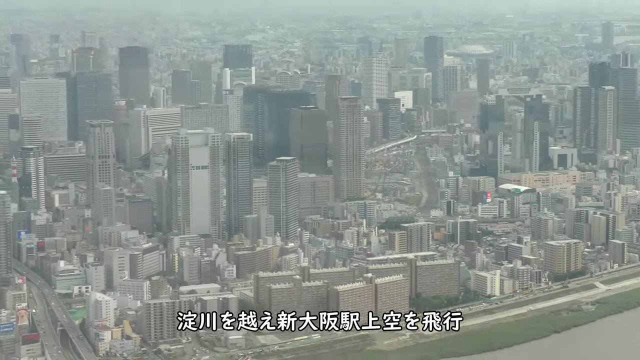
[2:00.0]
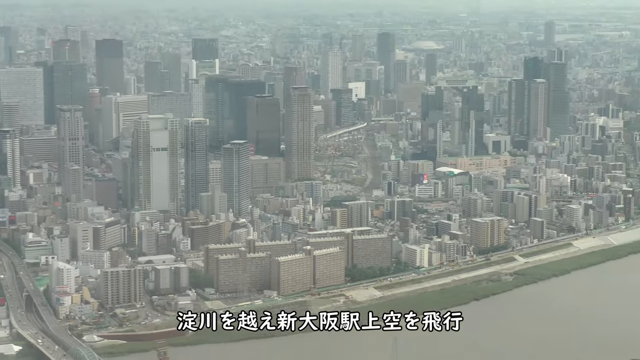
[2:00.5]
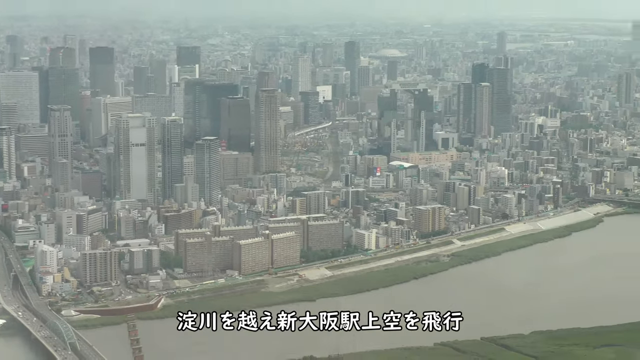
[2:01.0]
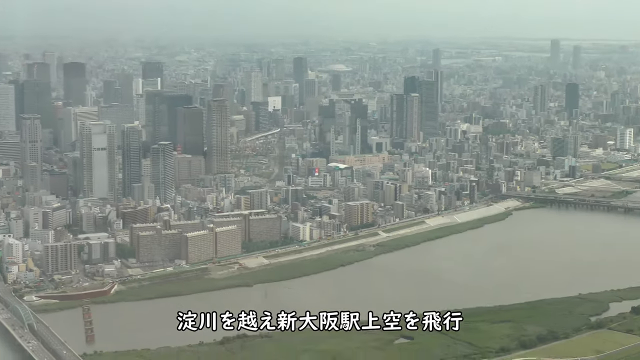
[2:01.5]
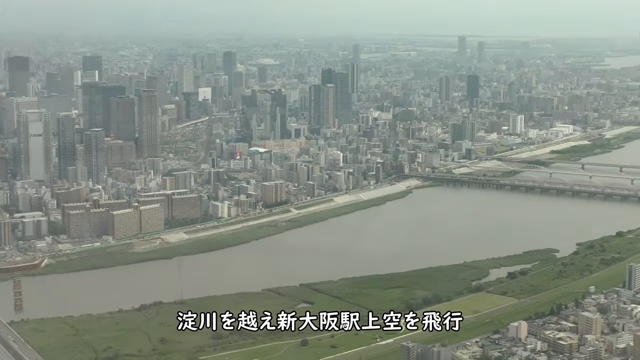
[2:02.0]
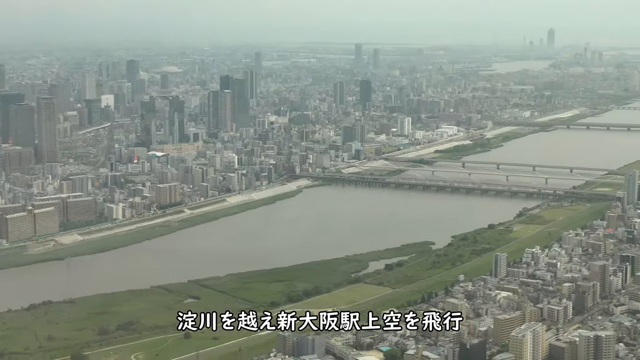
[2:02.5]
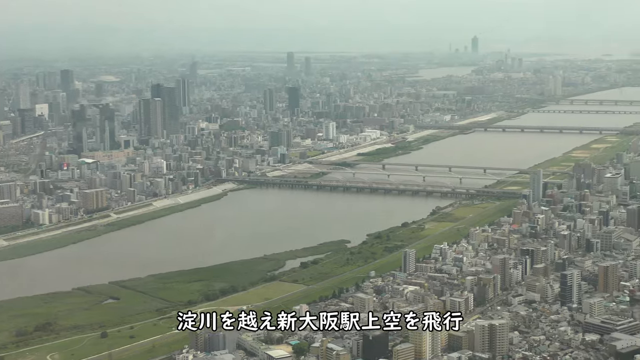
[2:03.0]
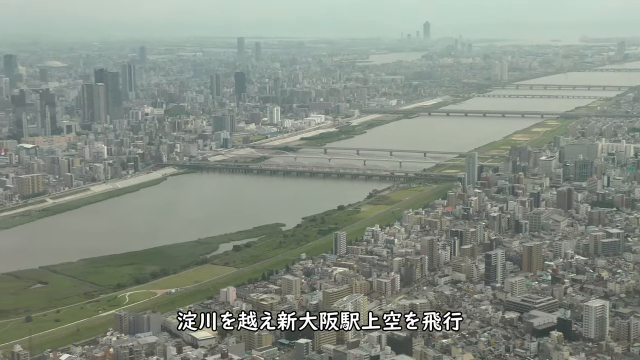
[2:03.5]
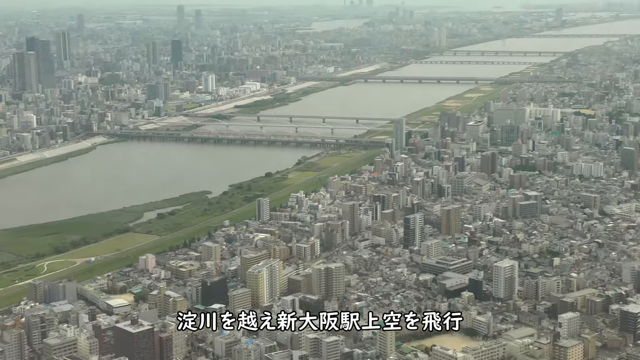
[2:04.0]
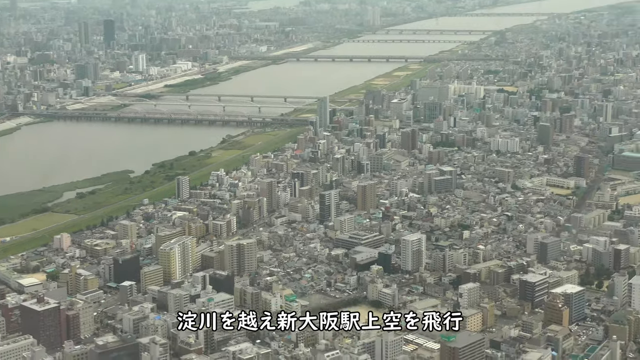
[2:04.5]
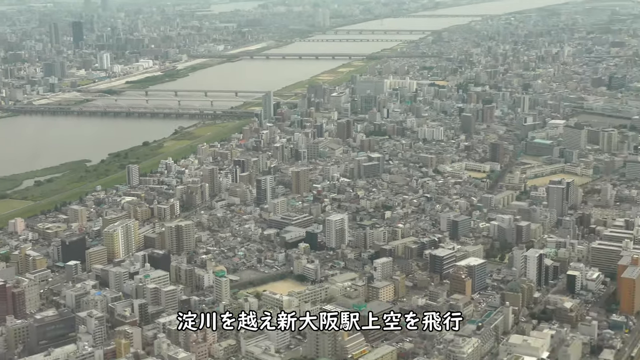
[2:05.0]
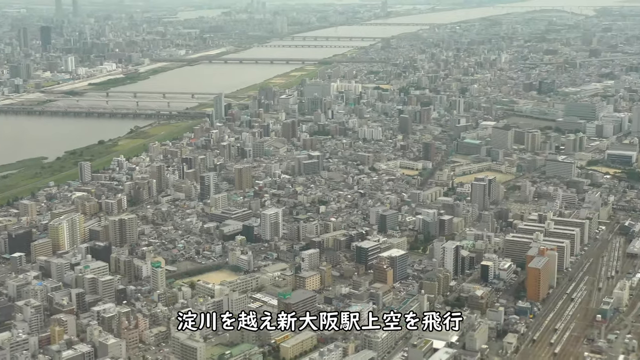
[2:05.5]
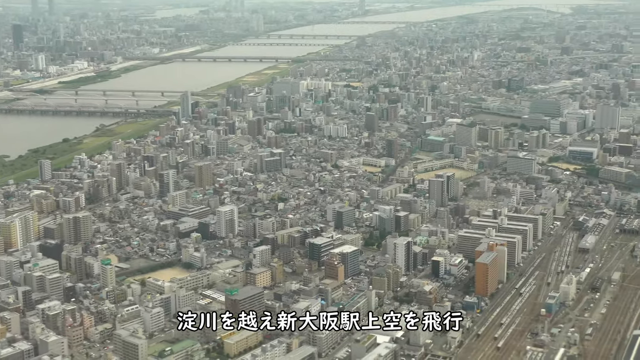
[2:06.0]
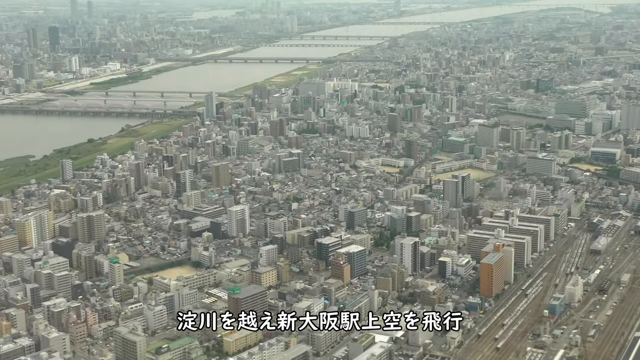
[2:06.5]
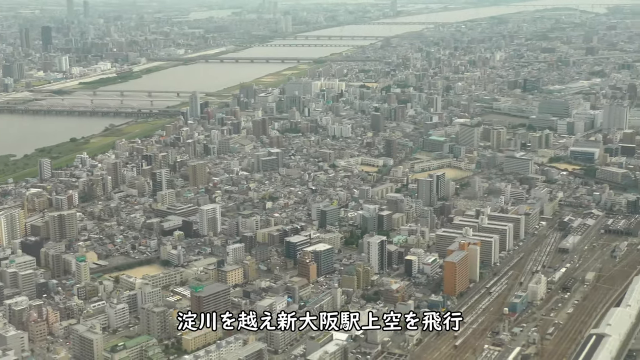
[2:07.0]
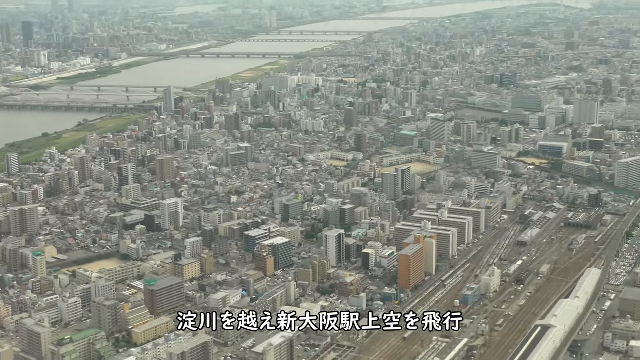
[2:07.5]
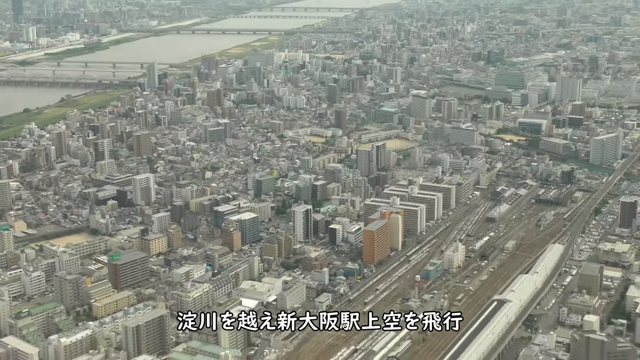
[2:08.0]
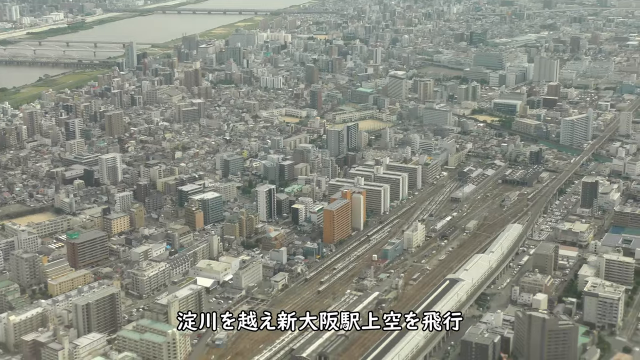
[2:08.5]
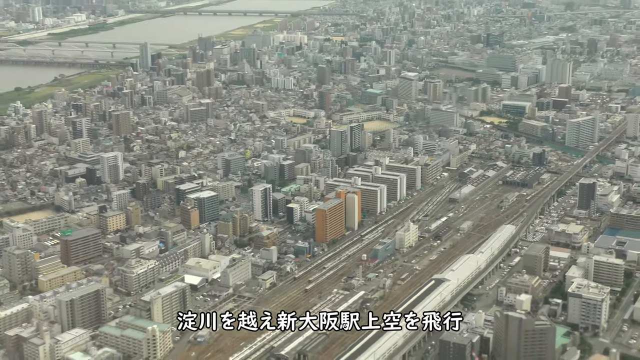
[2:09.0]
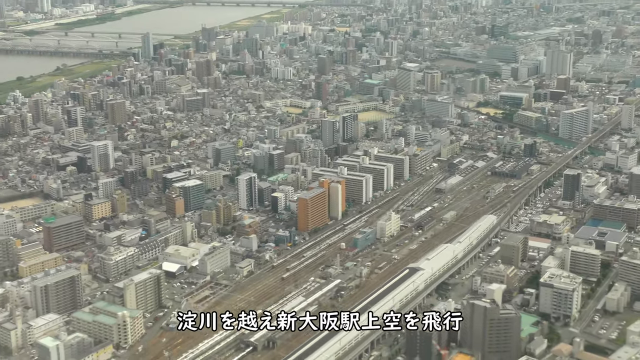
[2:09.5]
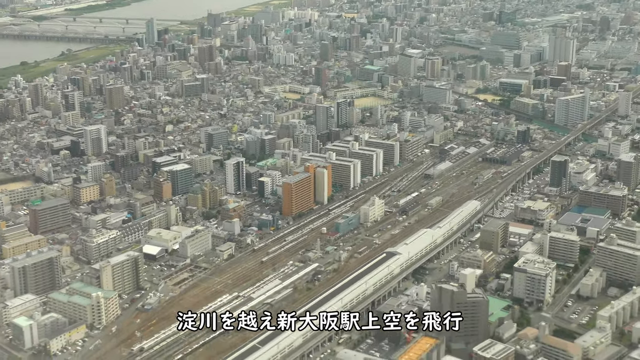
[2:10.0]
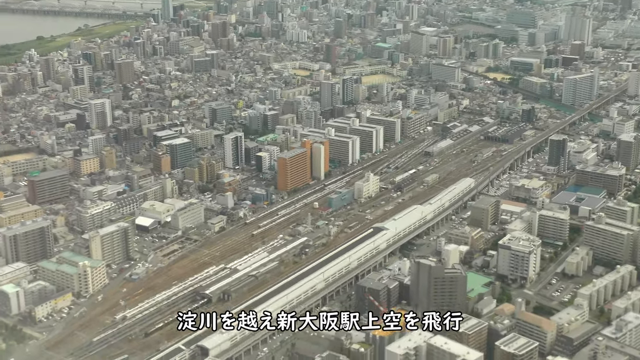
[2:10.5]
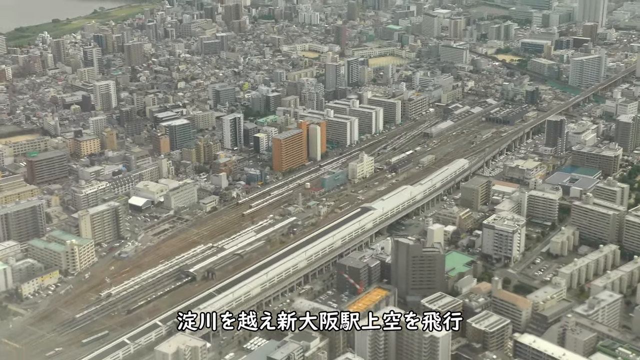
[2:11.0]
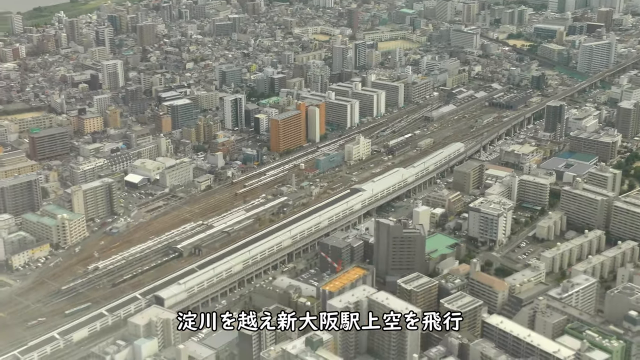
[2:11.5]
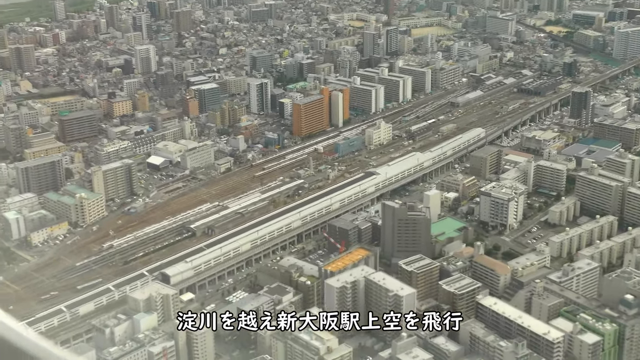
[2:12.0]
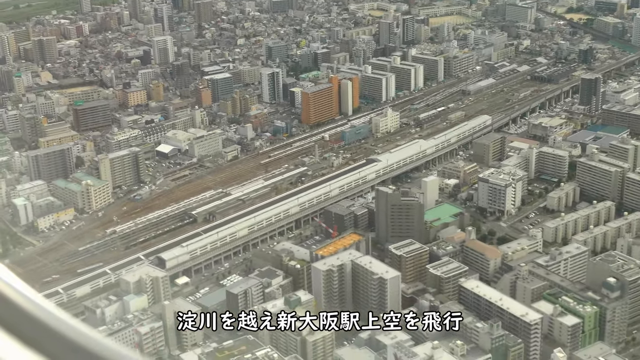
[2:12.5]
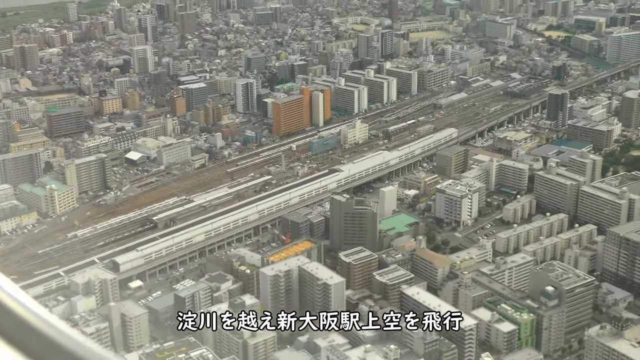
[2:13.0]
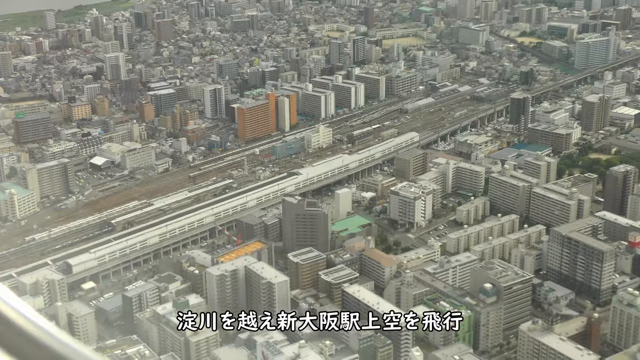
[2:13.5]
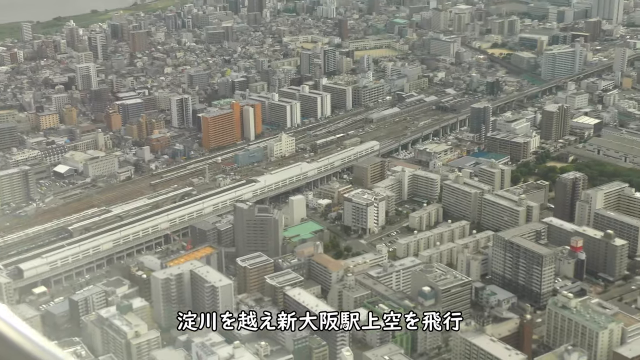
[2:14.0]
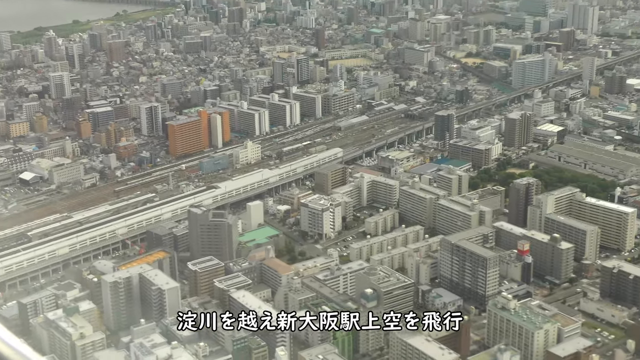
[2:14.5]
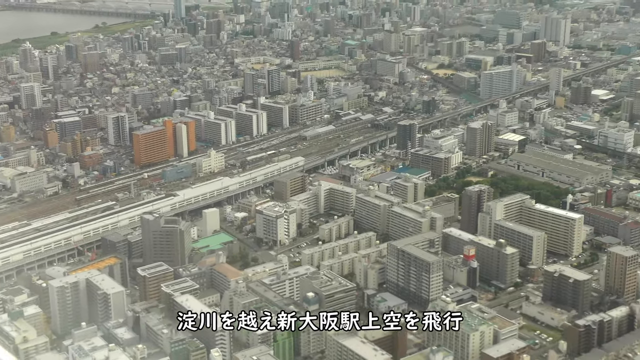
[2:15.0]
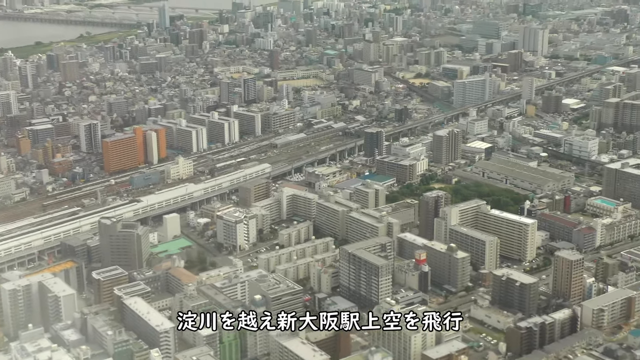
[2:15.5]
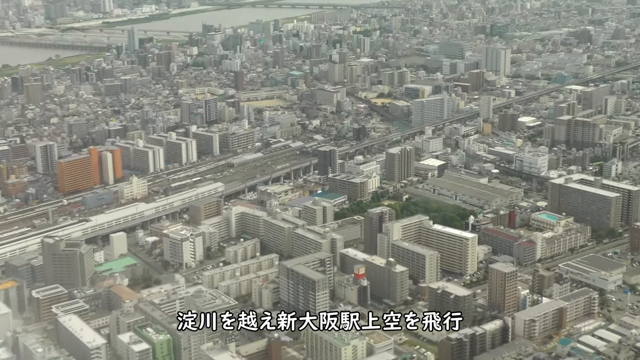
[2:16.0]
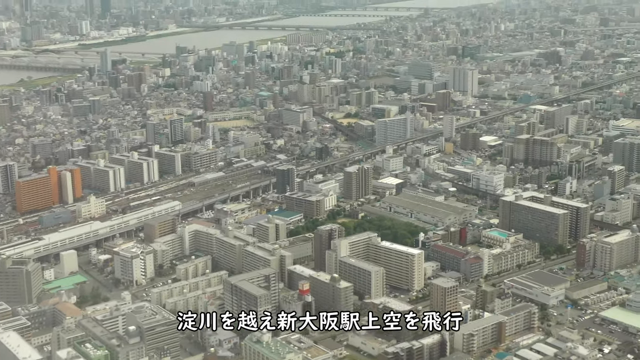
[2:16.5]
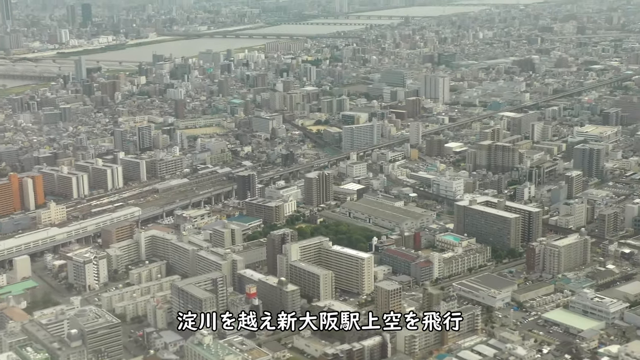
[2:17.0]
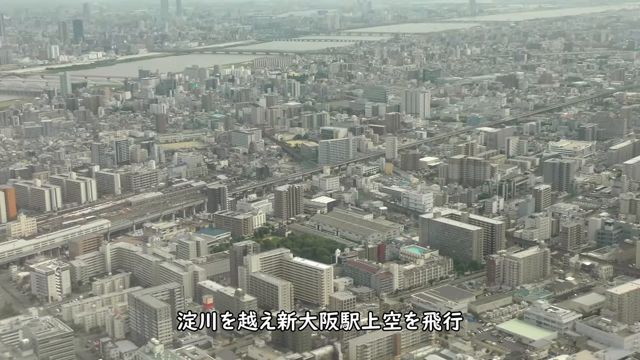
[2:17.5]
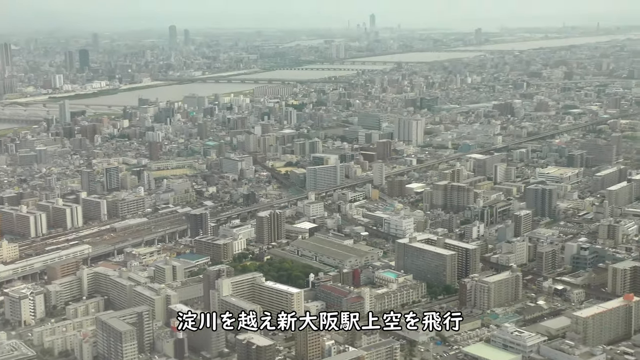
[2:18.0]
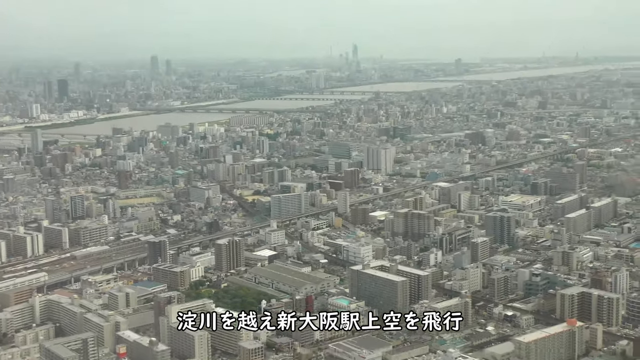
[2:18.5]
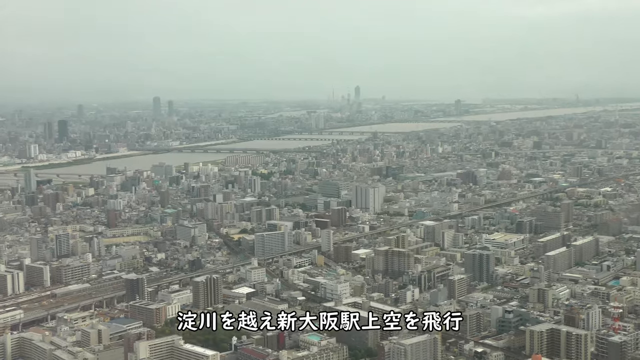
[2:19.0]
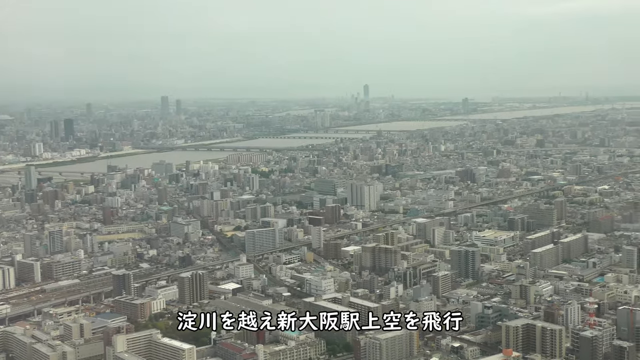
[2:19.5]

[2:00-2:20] The view starts on what appears to be the most dense, main area of downtown Tokyo with the tallest buildings. The plane then pans out to cross the river, which has dark gray water with lush green vegetation around it. A total of six bridges cross the river into another section of Tokyo, where the buildings are smaller and not as tall as on the main side. What appears to be a railroad yard is visible, with buildings alongside what appear to be railroad tracks. Two white trains are on the tracks, and various other objects that appear to be cars or maybe boxcars are next to the tracks. On the other side of the tracks are more densely packed buildings. The camera pans out to give a panoramic view of this part of Tokyo.